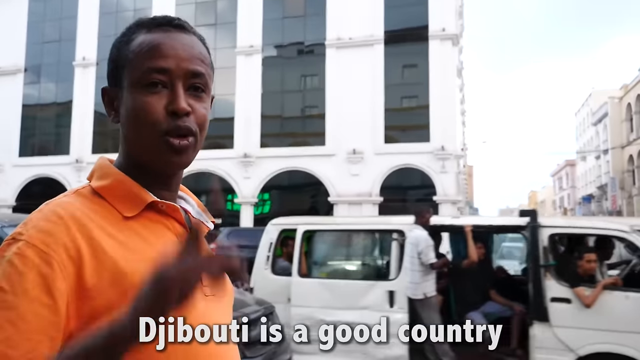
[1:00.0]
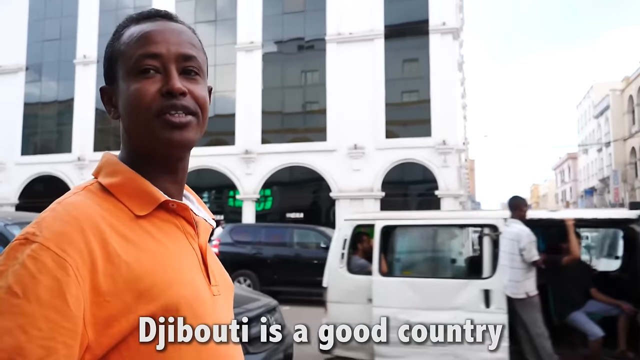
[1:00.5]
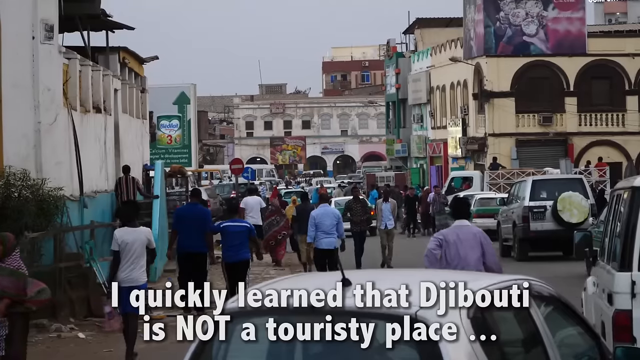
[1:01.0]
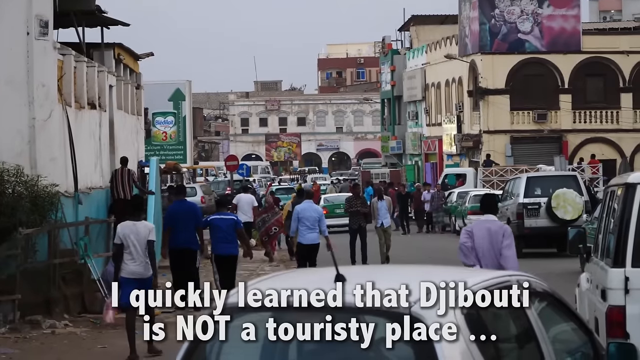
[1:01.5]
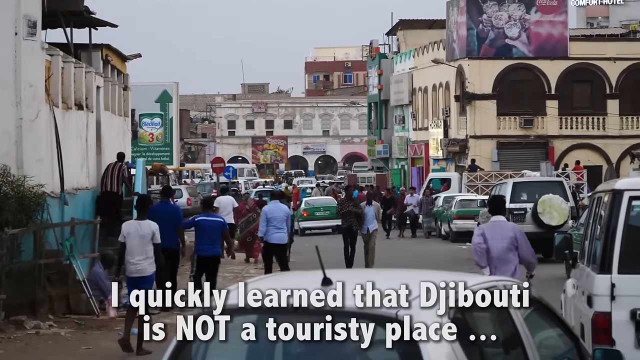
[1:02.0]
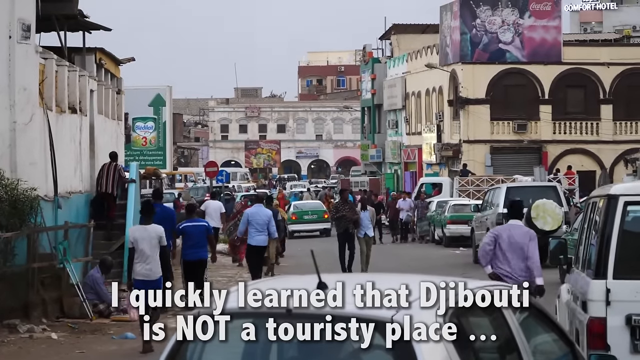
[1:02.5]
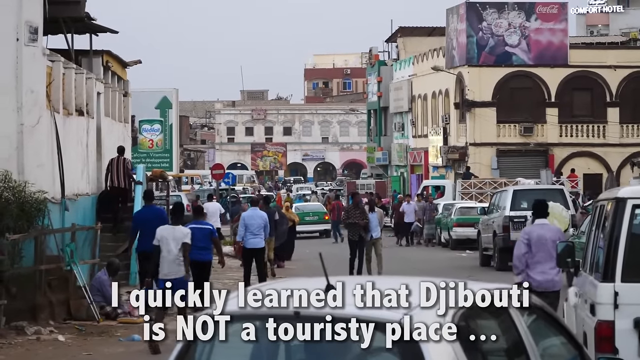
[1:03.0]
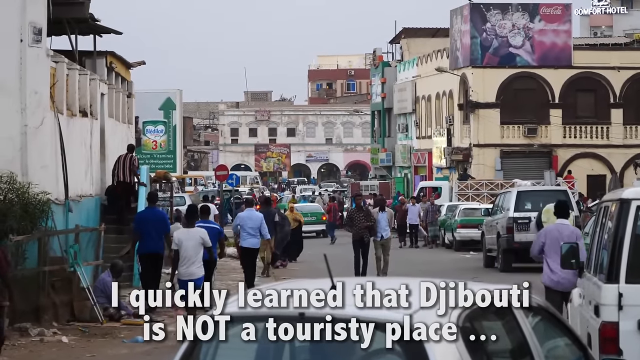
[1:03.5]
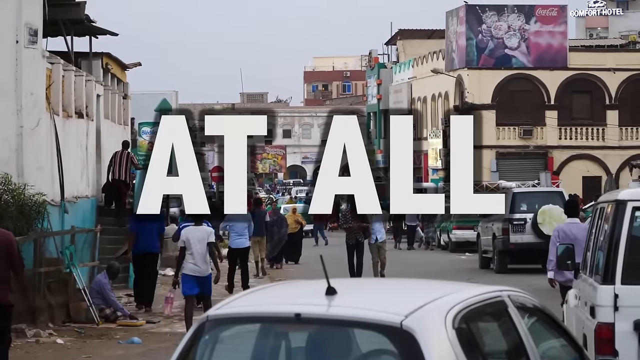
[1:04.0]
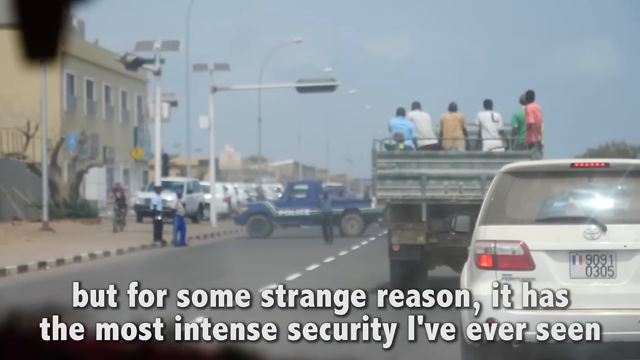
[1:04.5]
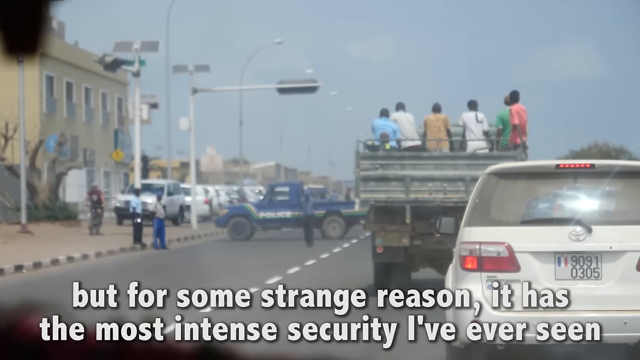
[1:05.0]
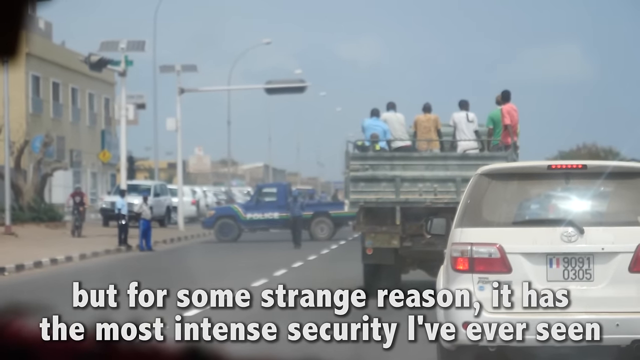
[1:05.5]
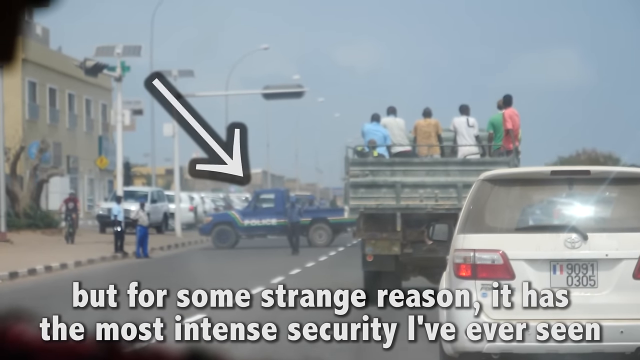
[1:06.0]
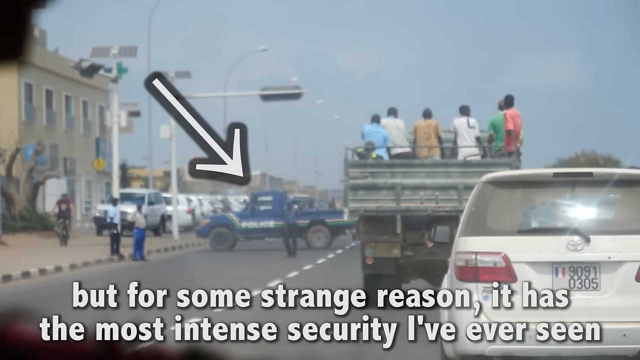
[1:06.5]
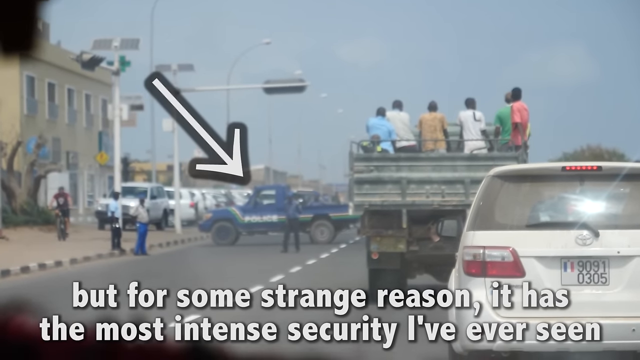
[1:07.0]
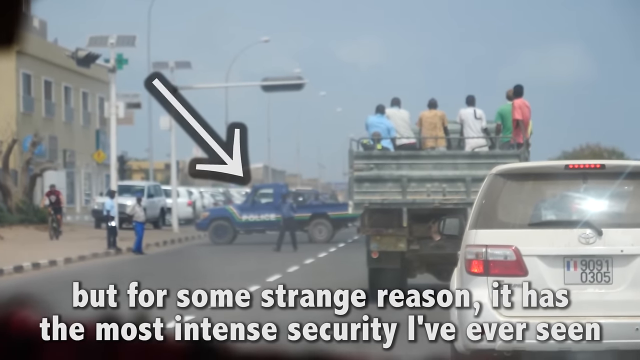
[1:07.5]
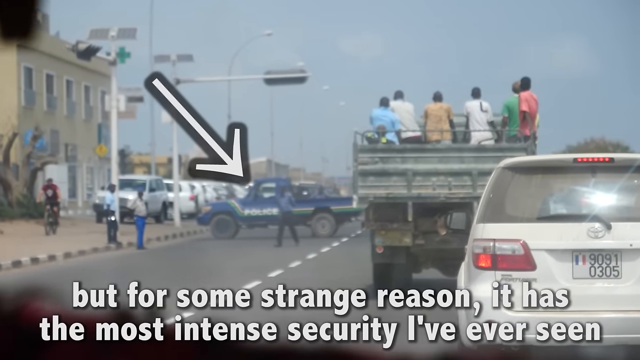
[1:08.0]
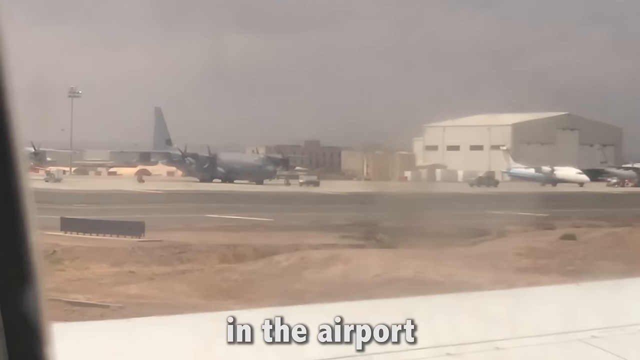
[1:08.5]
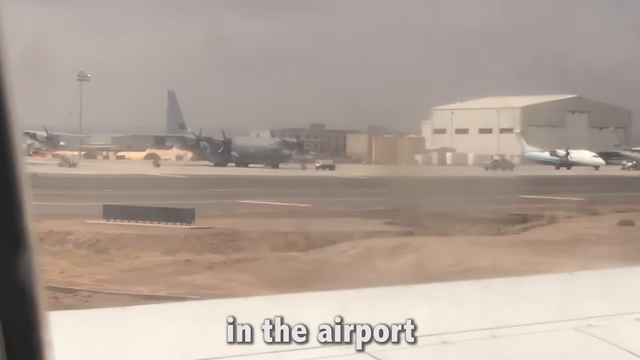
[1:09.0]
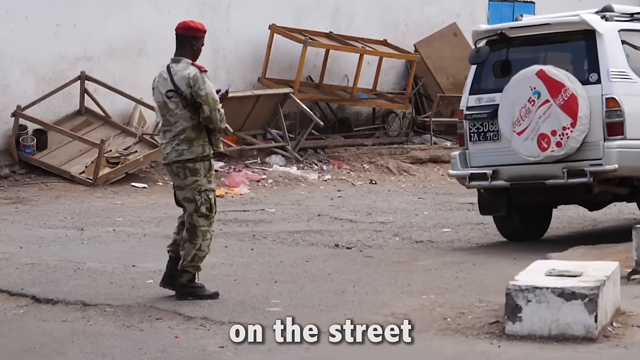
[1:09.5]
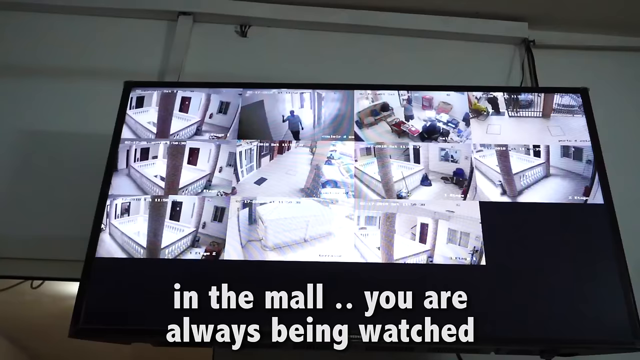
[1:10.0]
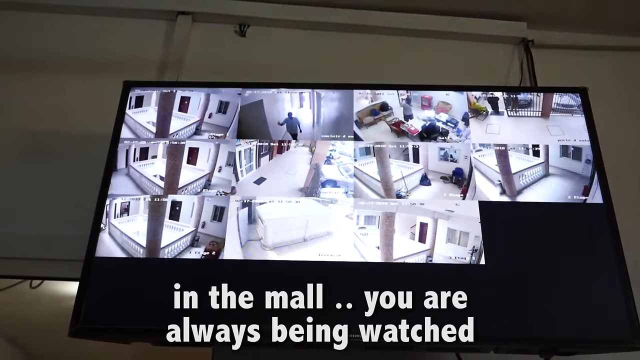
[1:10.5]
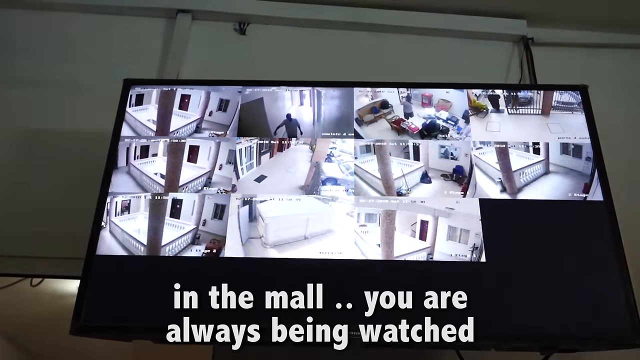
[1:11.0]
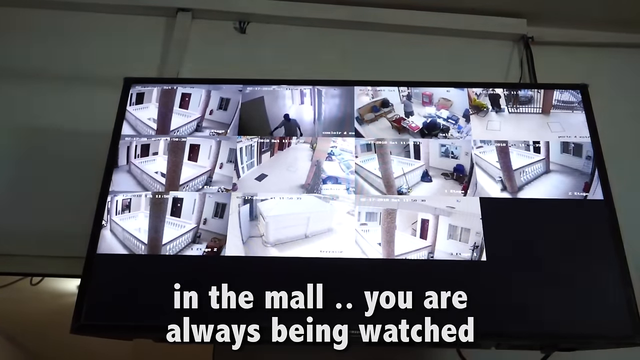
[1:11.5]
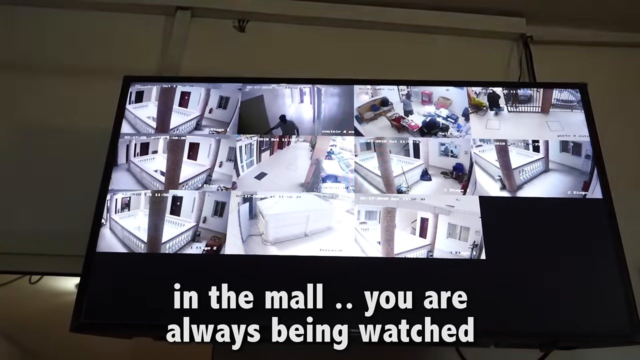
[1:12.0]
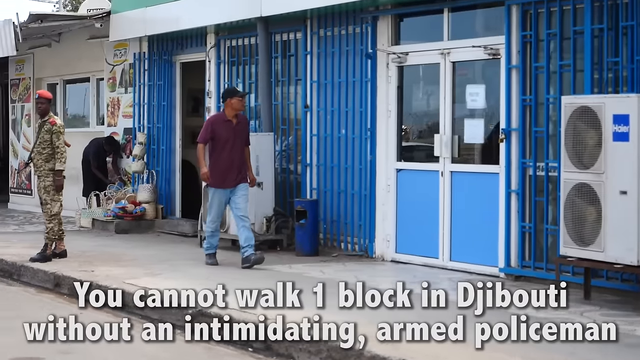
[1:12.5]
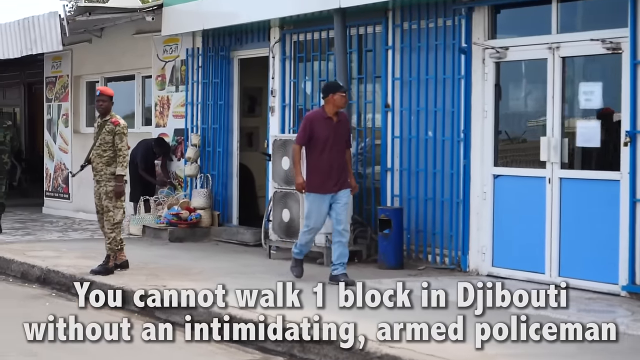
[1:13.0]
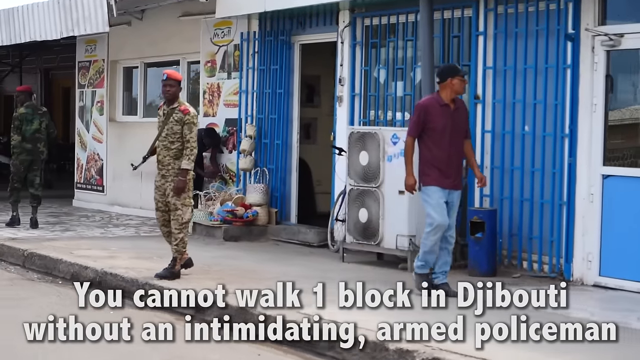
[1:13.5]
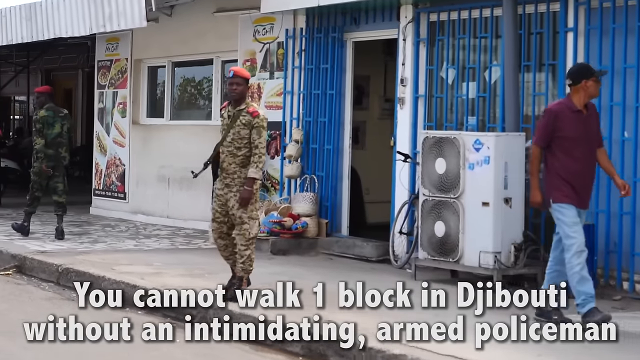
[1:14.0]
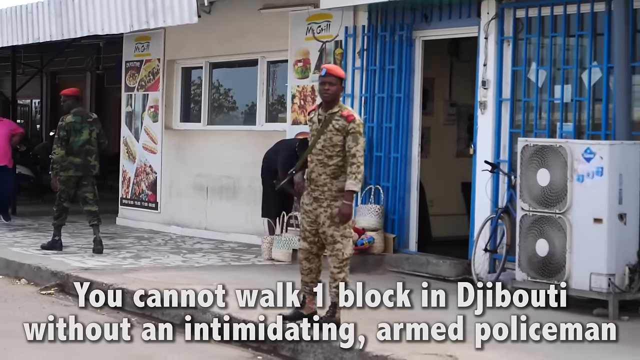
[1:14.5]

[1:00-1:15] The focus shifts to some of the less pleasant sides of the country. There looks to be a lot of military. People are loaded in the back of a very large truck. The view goes past an airport, and it looks dusty. The city is congested. Text says it has "the most intense security I've ever seen in the airport, on the street, in a mall," that "you're always being watched," and that it is "not touristy at all." Shots show the inside of a mall. Text mentions an "intimidating armed police presence." The place looks almost war-torn. Men dressed in fatigues or camo suits wear red or burgundy berets and appear to be police. A blue truck with a white stripe, maybe a police car, blocks part of a road.